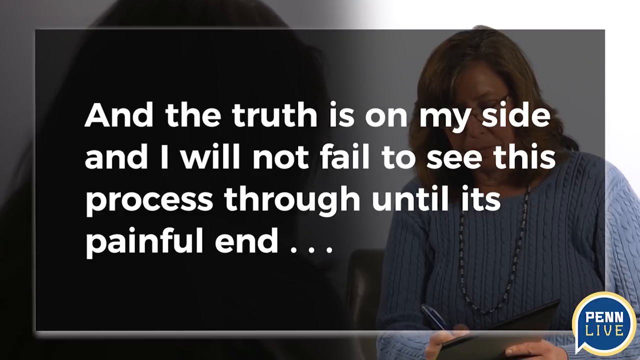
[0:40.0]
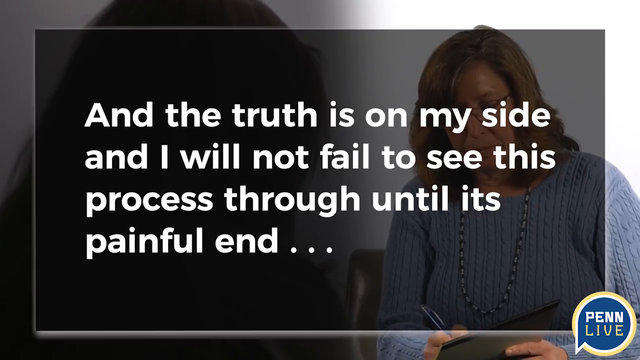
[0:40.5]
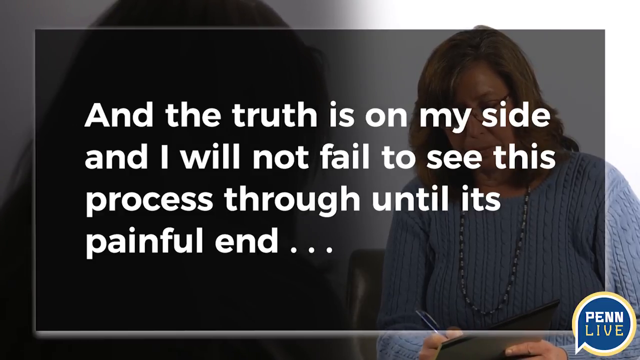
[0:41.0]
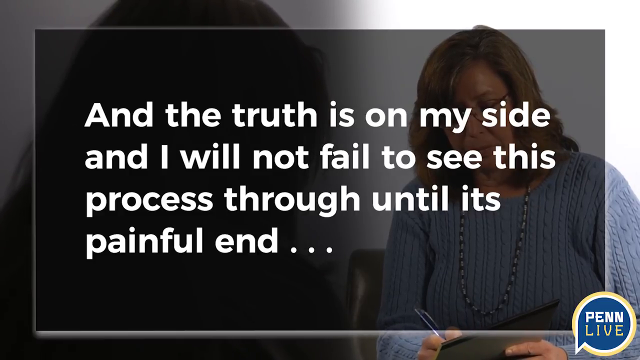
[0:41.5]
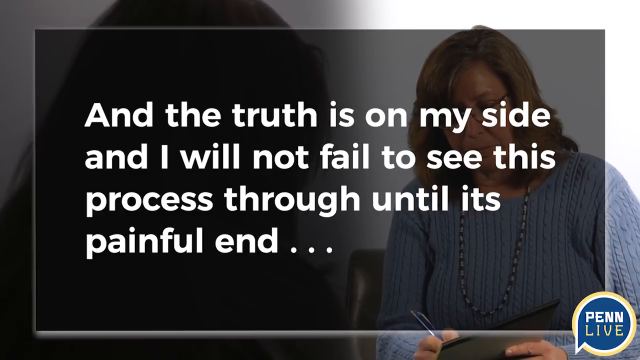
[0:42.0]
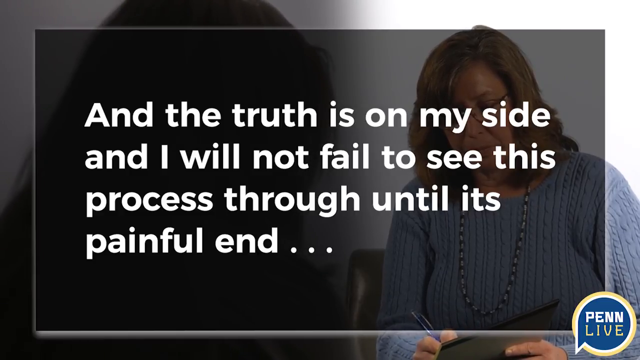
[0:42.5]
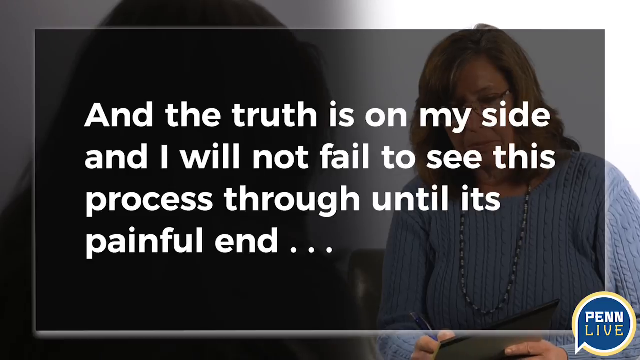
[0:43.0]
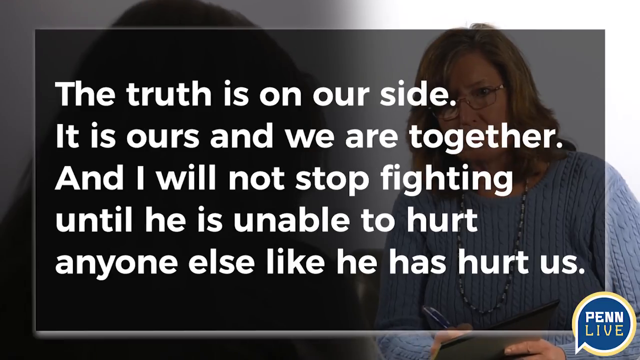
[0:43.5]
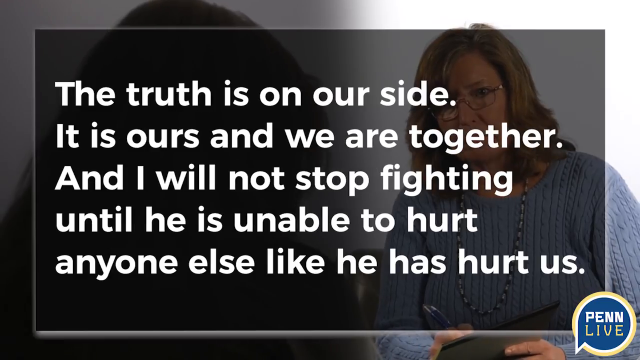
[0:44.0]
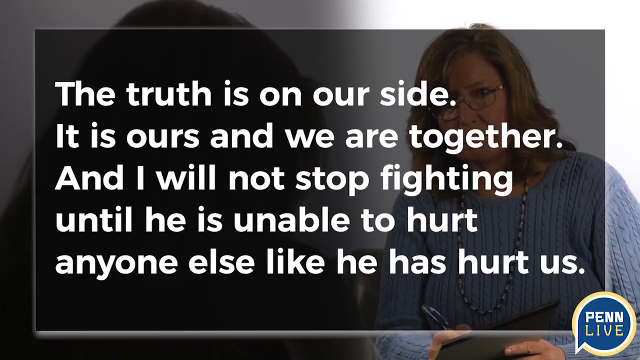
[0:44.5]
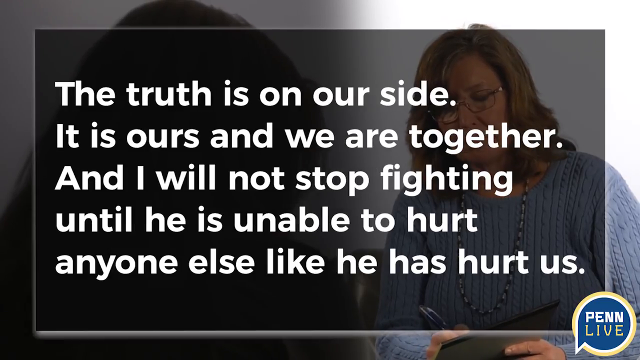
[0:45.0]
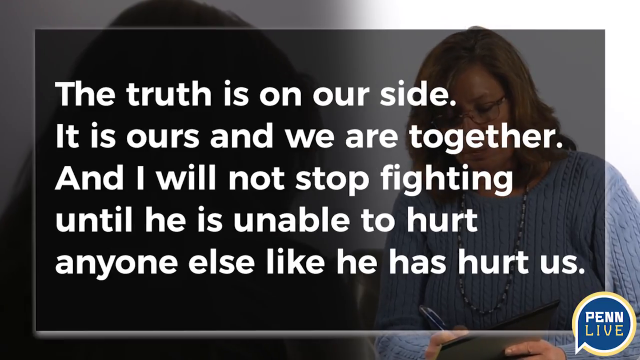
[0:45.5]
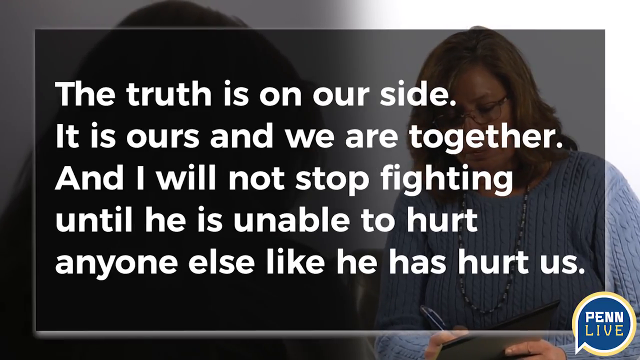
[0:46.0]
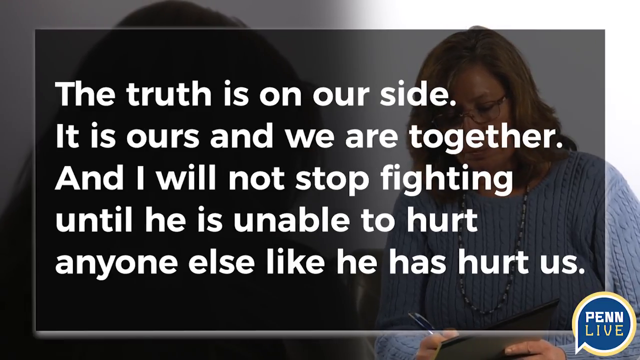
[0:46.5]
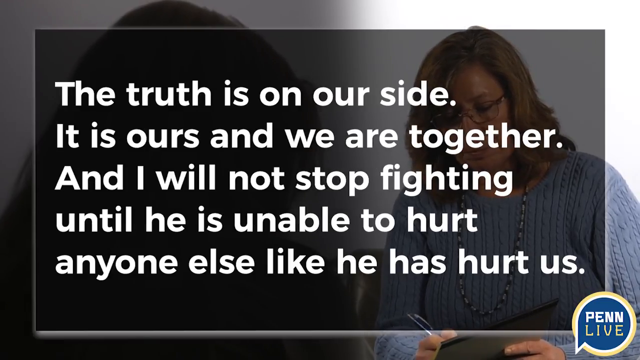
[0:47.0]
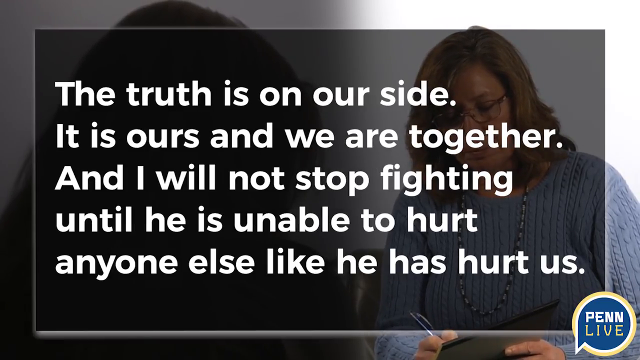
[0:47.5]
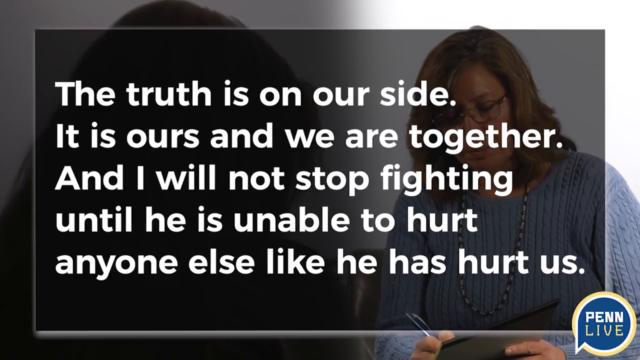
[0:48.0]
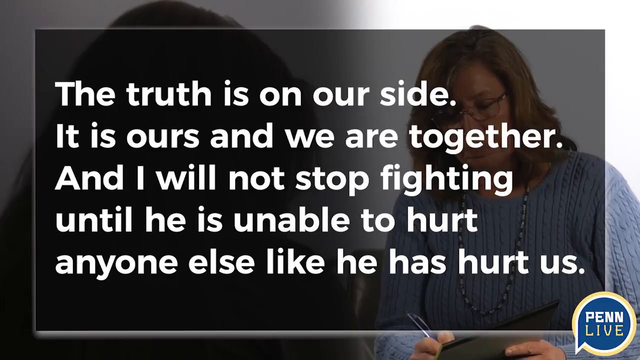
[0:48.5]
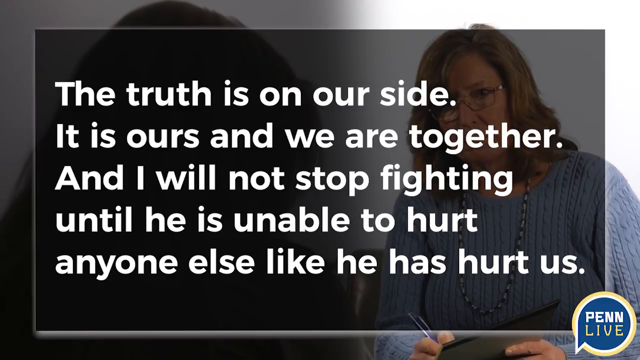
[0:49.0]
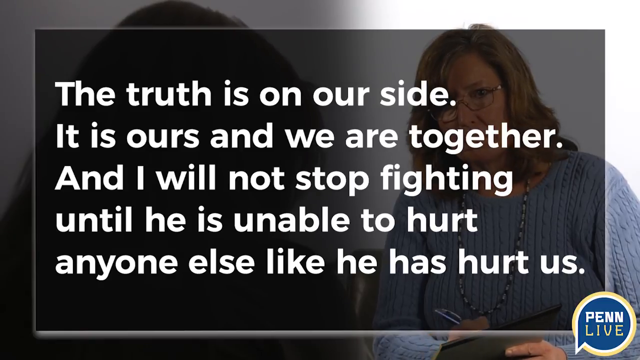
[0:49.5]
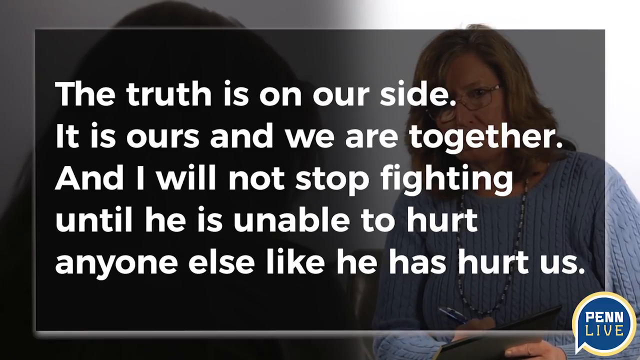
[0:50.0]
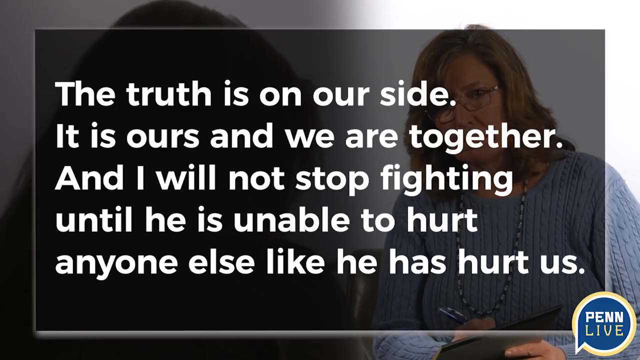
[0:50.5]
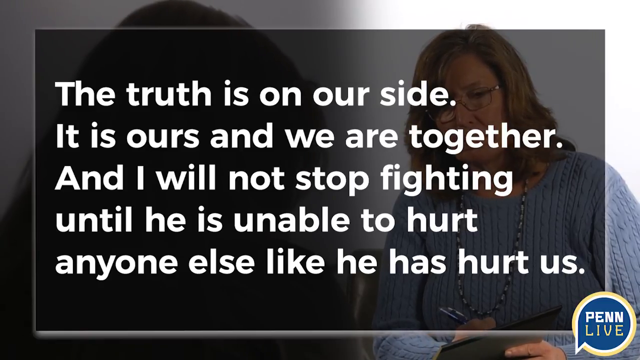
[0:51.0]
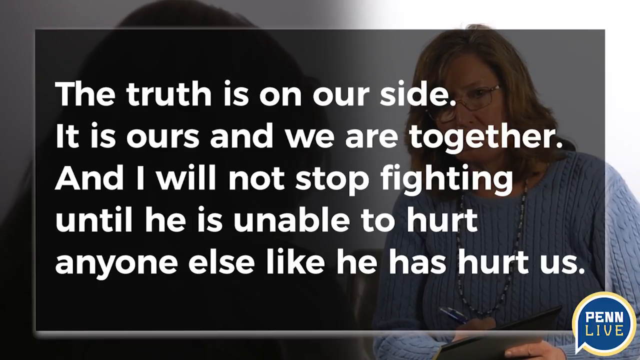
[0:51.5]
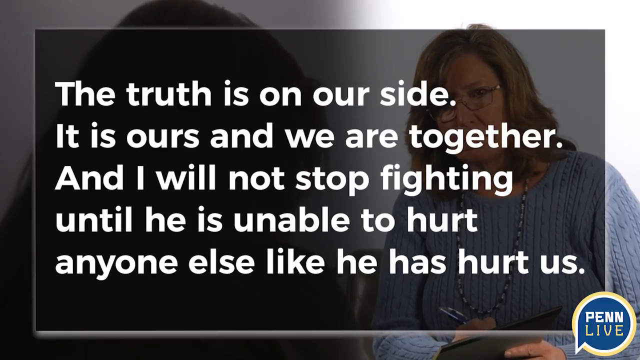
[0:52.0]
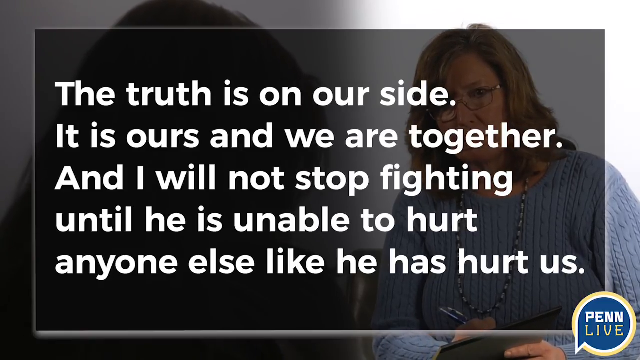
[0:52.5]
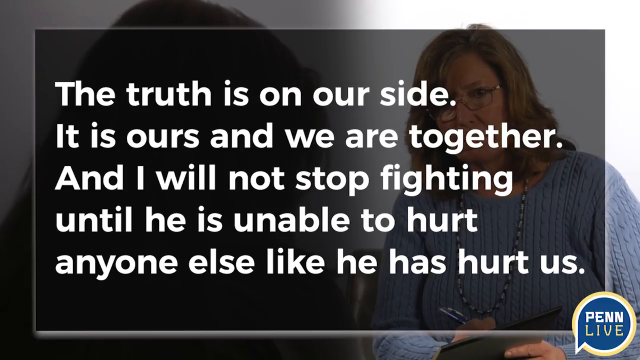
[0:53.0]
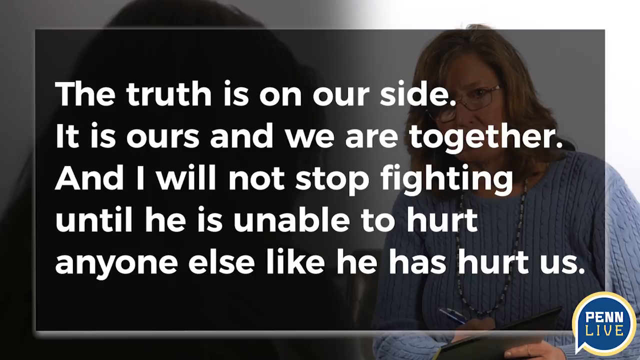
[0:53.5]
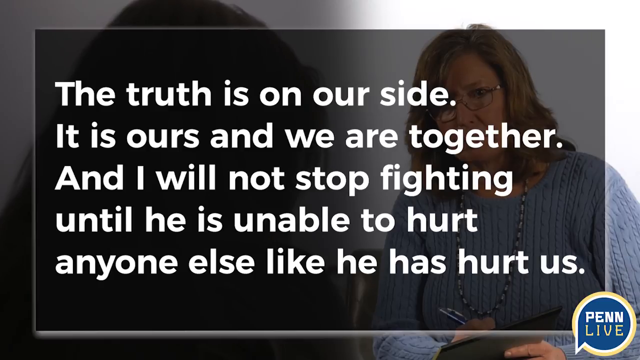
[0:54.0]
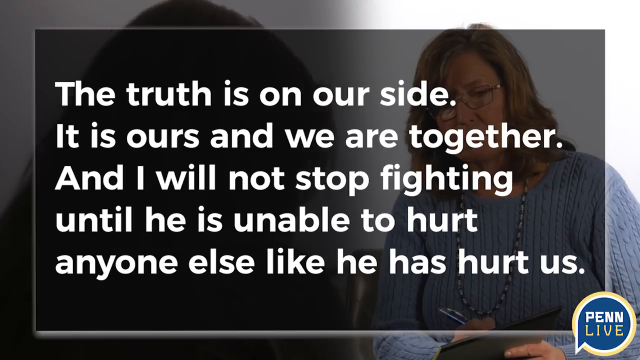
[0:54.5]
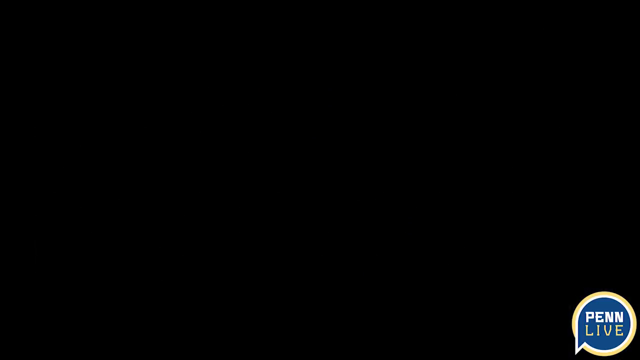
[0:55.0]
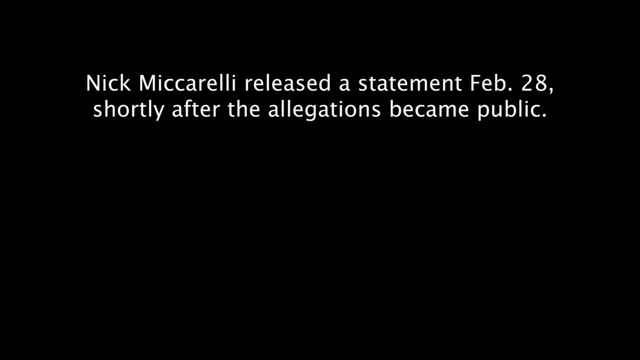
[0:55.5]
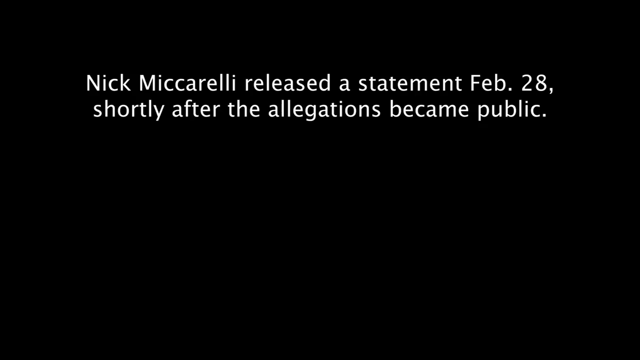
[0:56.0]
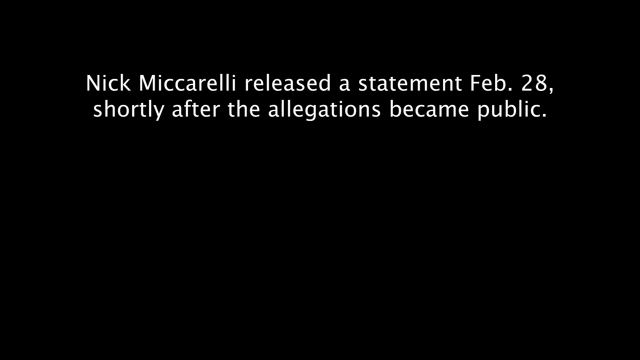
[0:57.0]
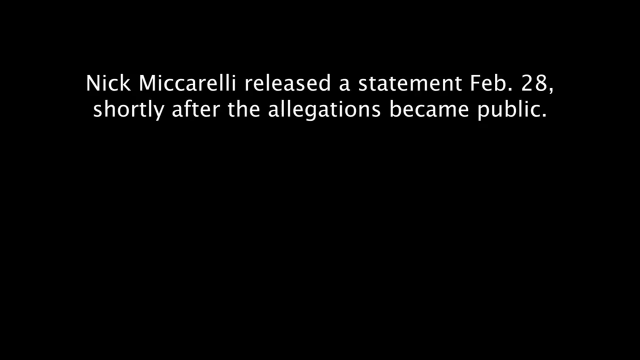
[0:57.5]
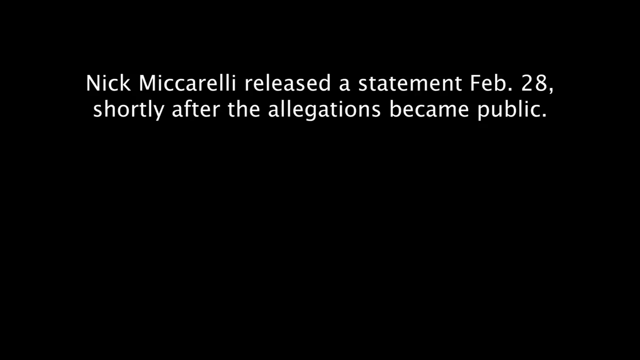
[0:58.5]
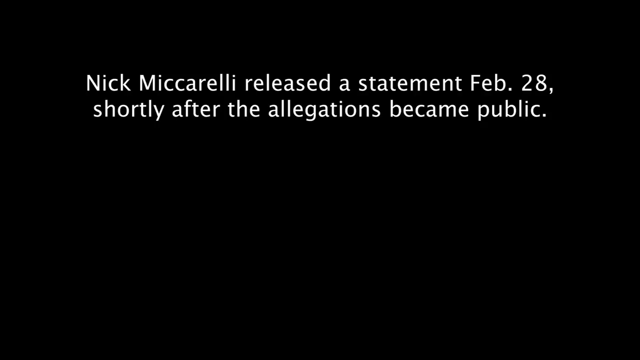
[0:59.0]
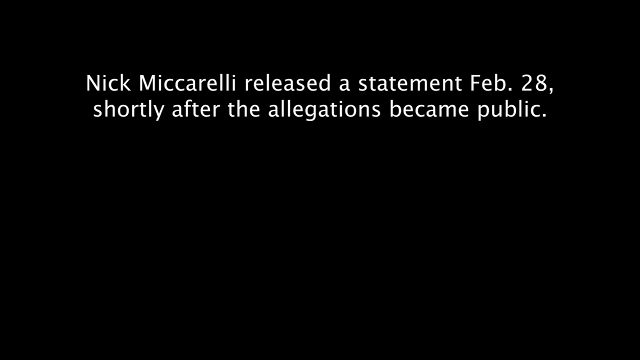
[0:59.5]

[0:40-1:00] The interview continues between the hidden person and the interviewer, who has blonde hair and wears glasses. The hidden person's statement is written on screen in white font on a black background, with a reference to a statement made on February 28. The interviewer's face is visible; she takes notes, holding a black pen in her right hand and writing everything in a book as the hidden person makes the statement. The on-screen statement reads "the truth is on my side and I will not fail to see this process through until its end."